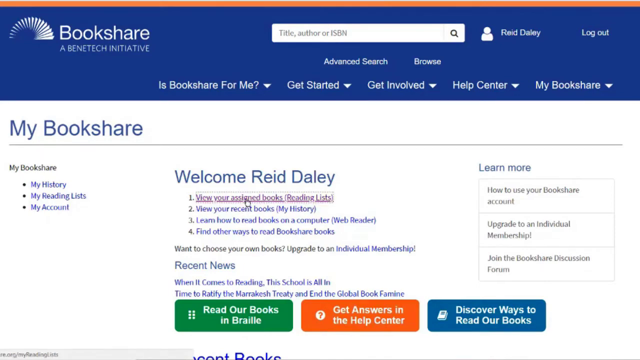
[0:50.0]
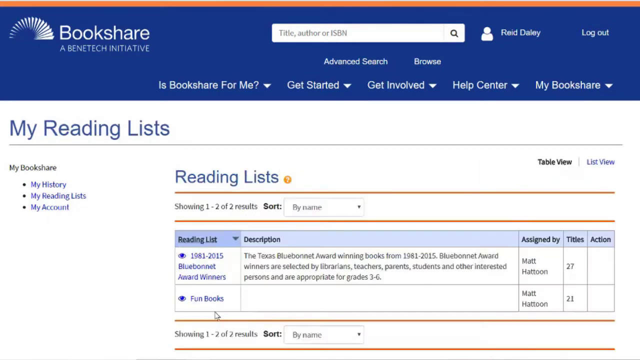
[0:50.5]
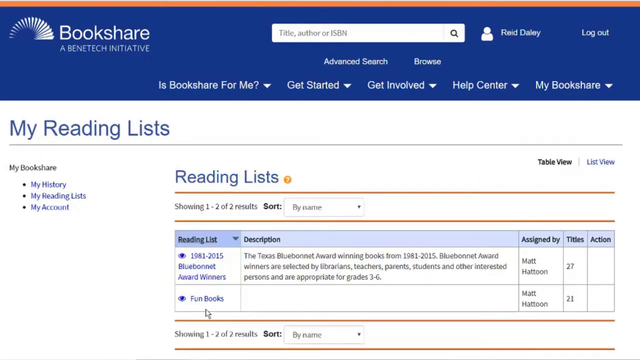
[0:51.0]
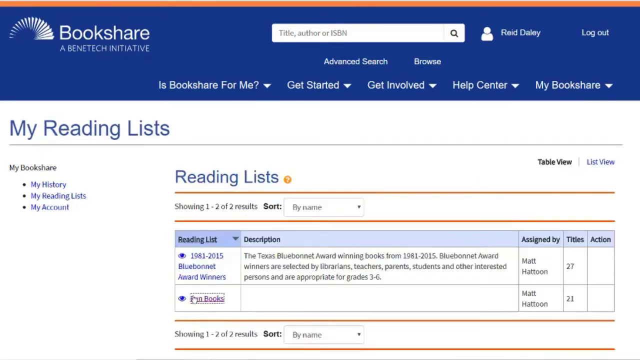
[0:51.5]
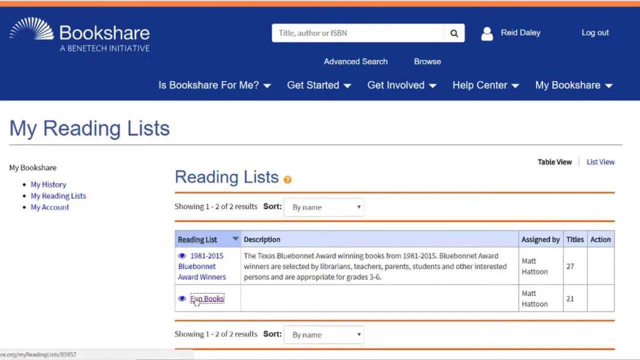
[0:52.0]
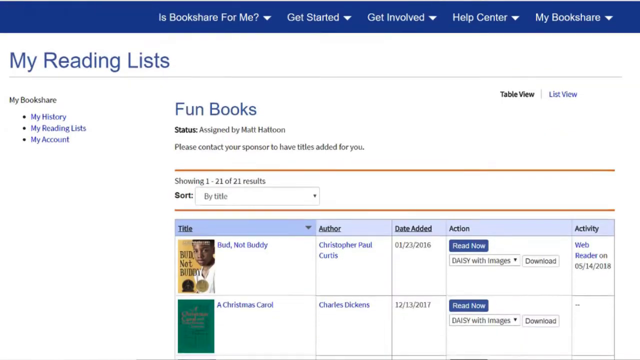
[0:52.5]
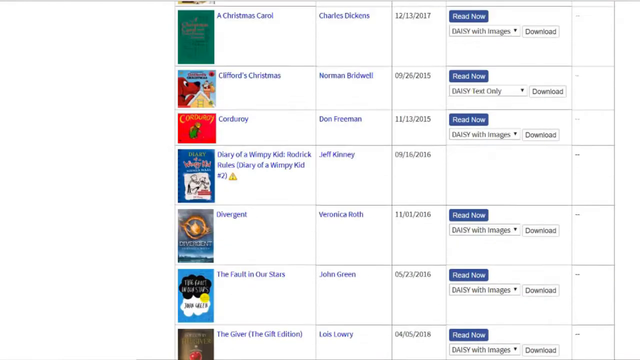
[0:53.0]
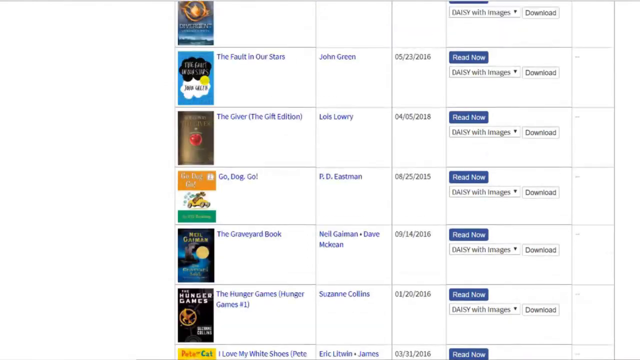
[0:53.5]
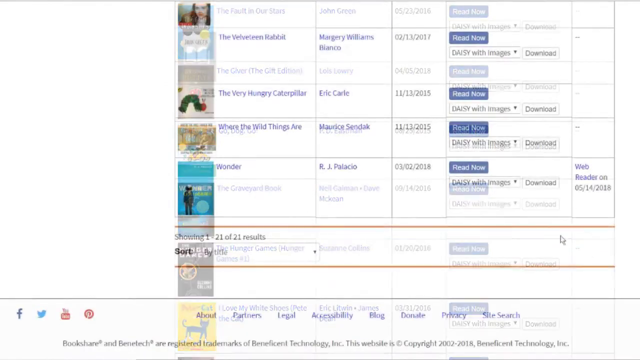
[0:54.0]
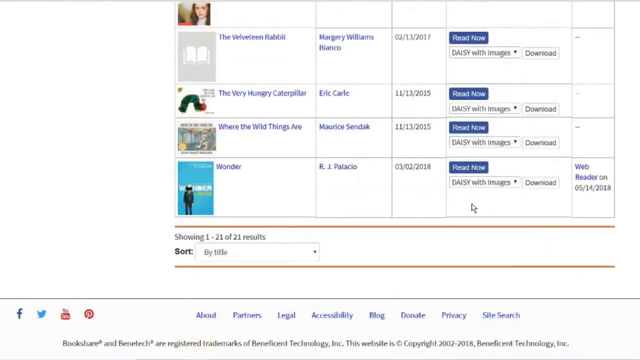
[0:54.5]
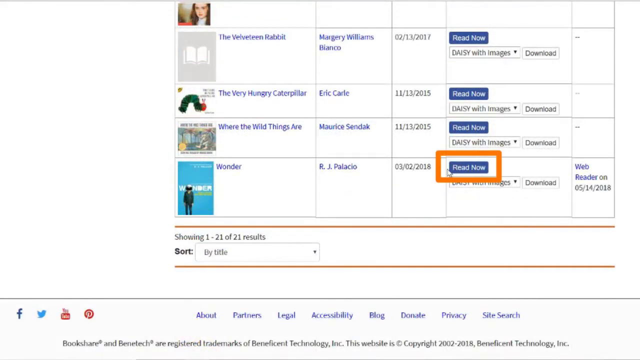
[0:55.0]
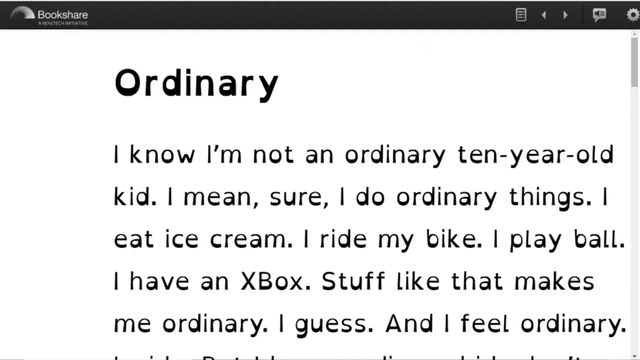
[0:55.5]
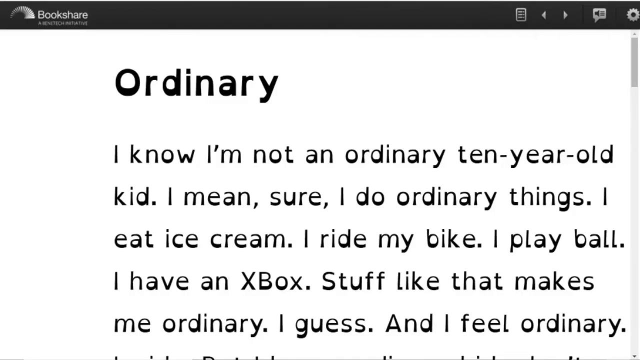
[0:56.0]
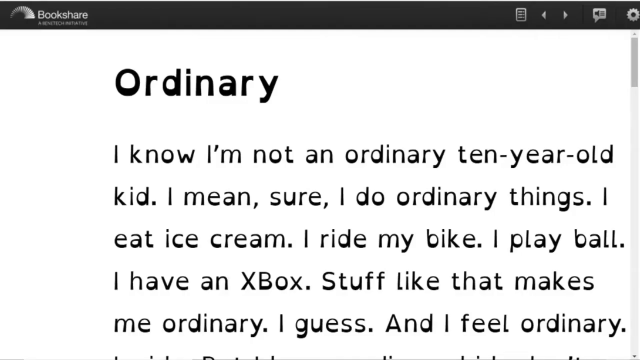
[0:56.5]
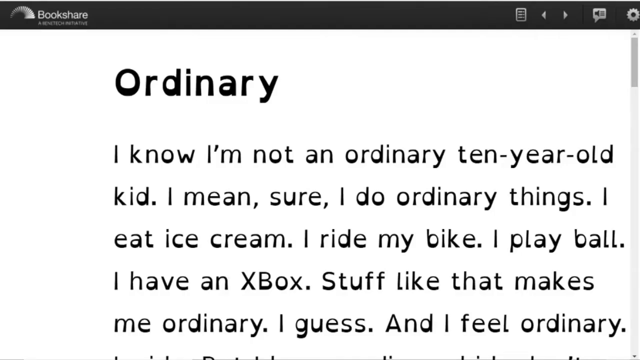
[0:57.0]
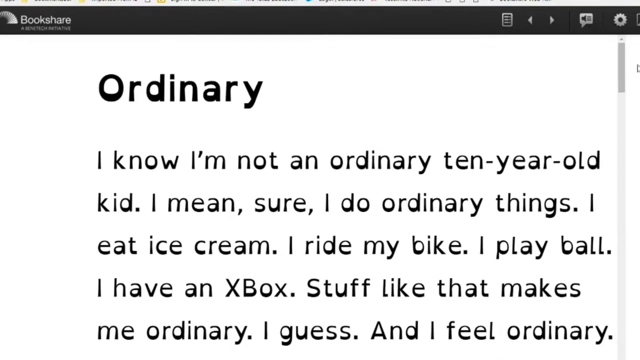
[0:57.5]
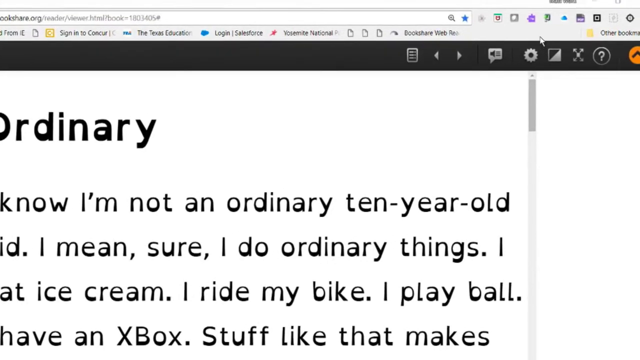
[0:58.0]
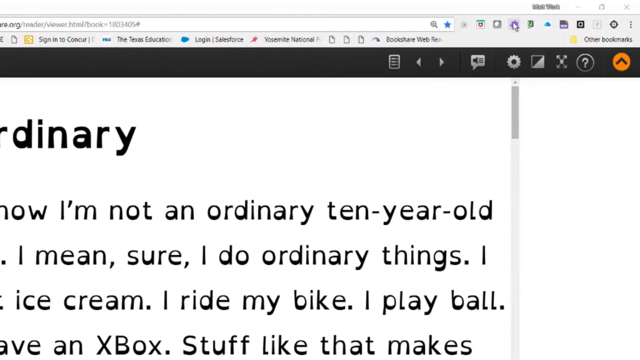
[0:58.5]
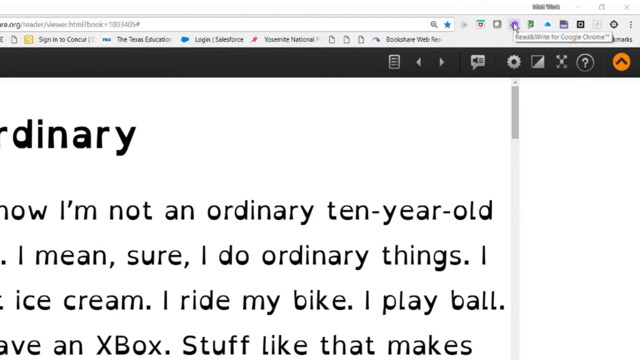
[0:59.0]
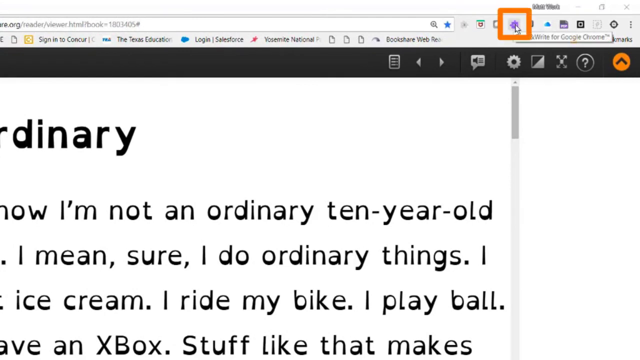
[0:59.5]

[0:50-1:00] The user selects the My Reading Lists option, which opens a page showing two personal reading lists: Blue Bonnet Award winners and Fun Books. The user selects Fun Books, and a new screen appears, presumably showing the books the user has chosen for that list. Multiple books appear as the user scrolls down, each with a title, an author, and a date, and some with options to read now or download. The user highlights Read Now for a book called Wonder by R.J. Palacio with an orange rectangle and clicks the Read Now button. The scene then presumably moves to the opened book: a white page with black text, presumably the book itself. The user pans up to the right of the browser to show the previously installed extension, Read&Write for Google Chrome, and highlights it with an orange square.